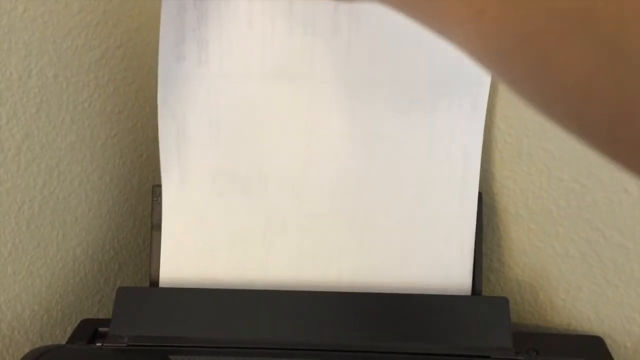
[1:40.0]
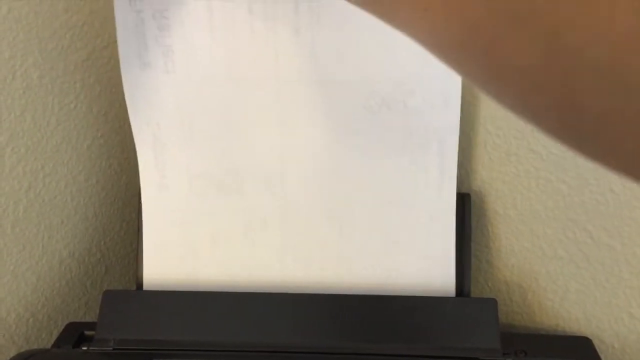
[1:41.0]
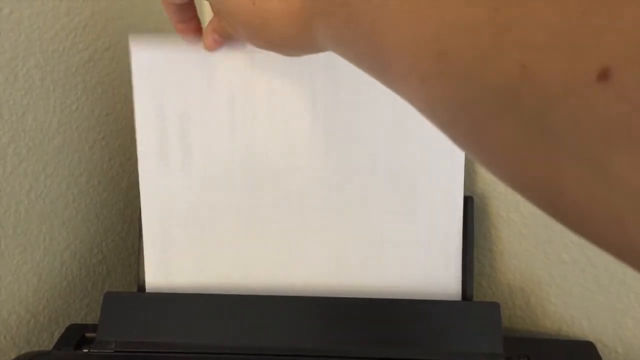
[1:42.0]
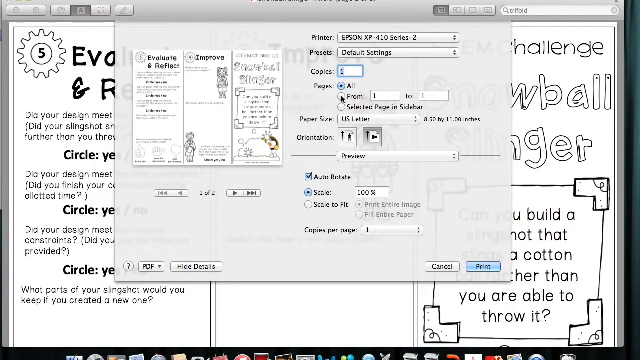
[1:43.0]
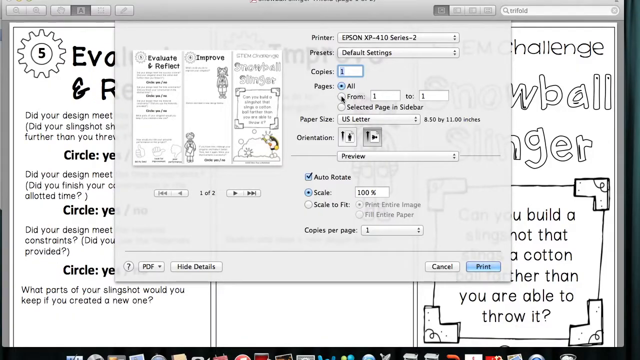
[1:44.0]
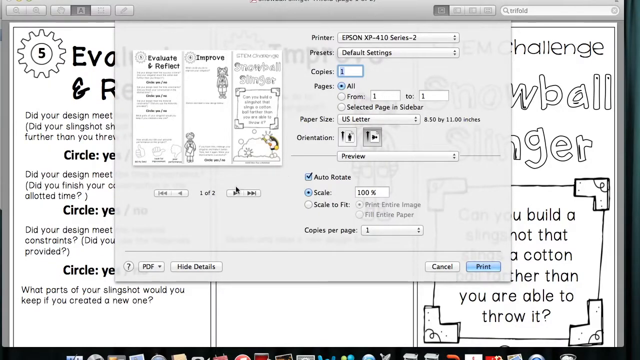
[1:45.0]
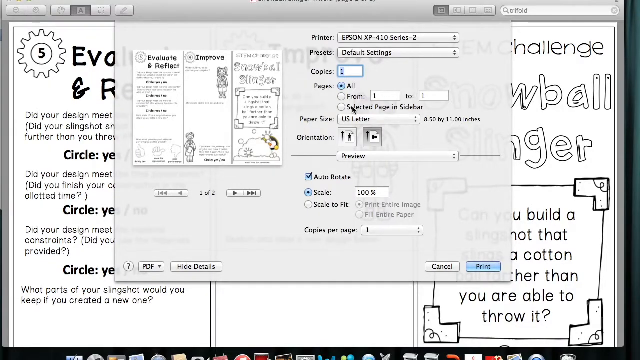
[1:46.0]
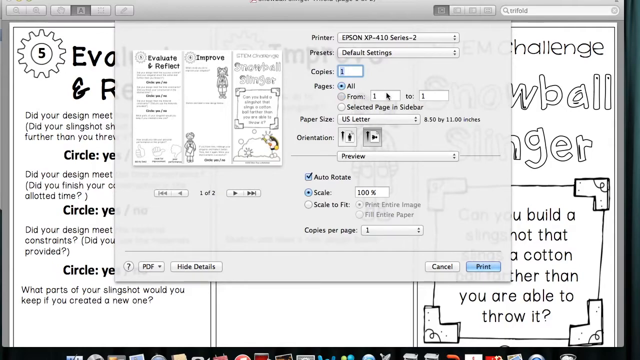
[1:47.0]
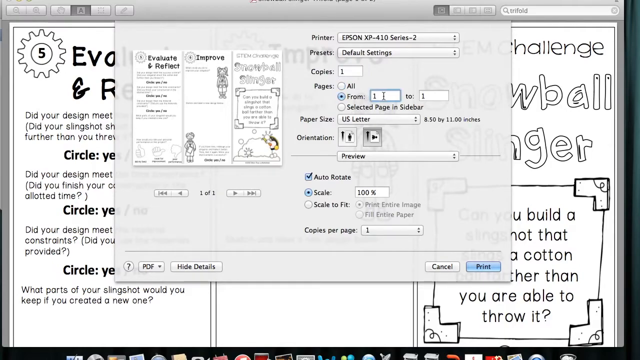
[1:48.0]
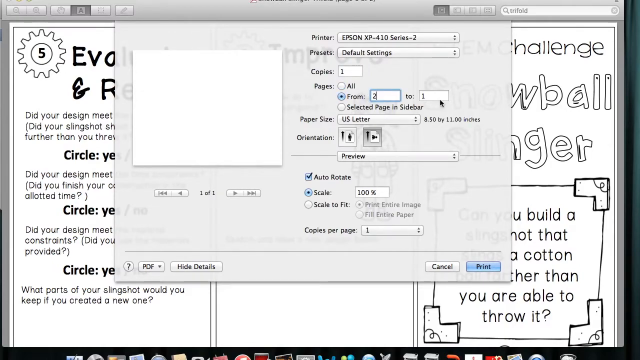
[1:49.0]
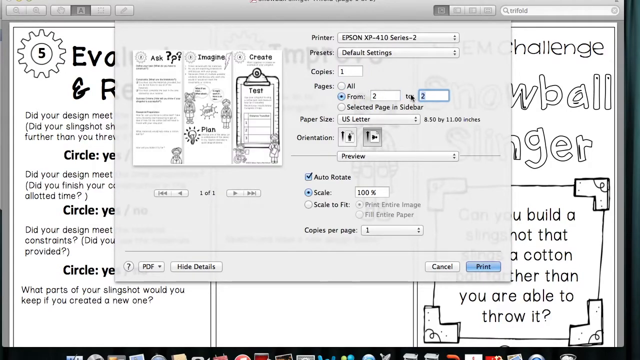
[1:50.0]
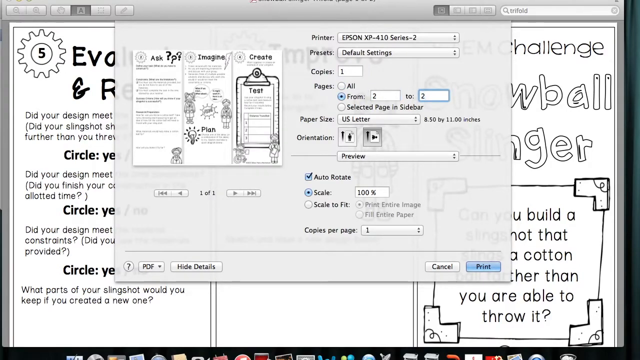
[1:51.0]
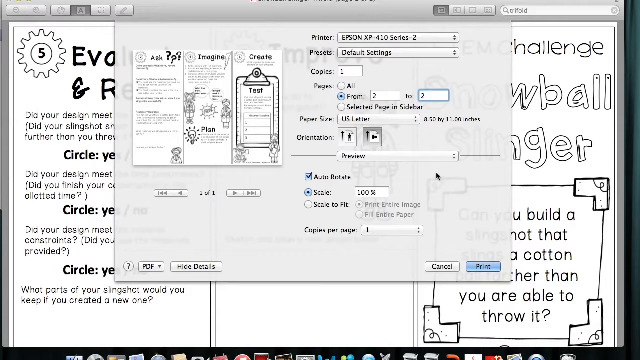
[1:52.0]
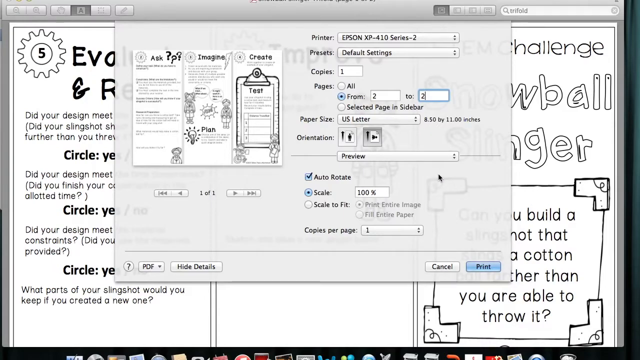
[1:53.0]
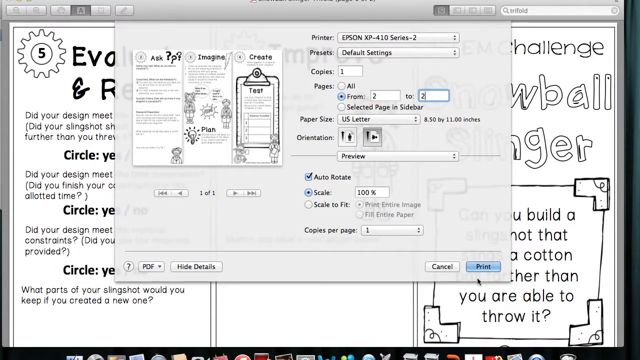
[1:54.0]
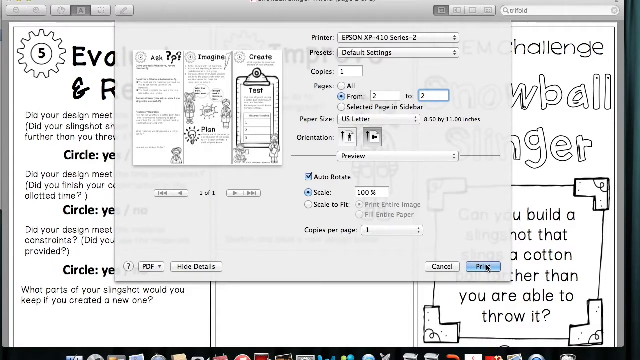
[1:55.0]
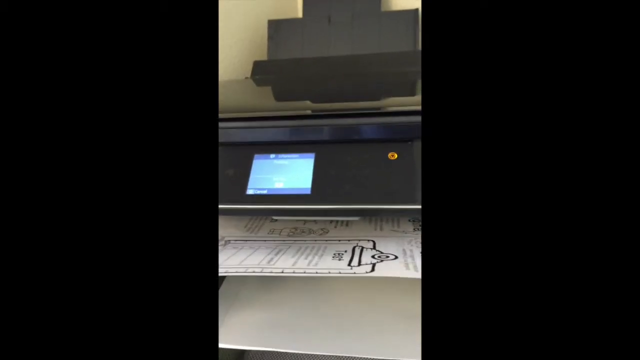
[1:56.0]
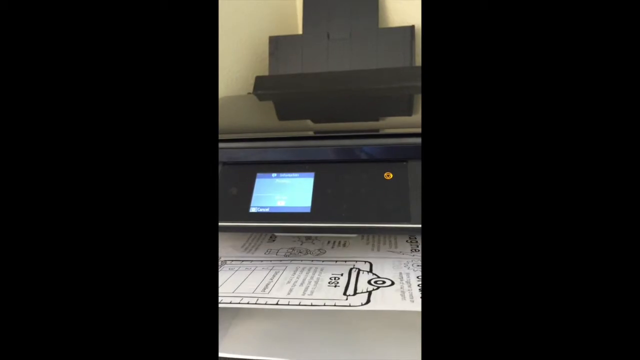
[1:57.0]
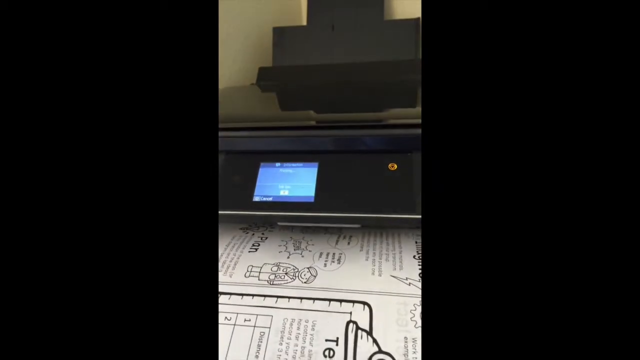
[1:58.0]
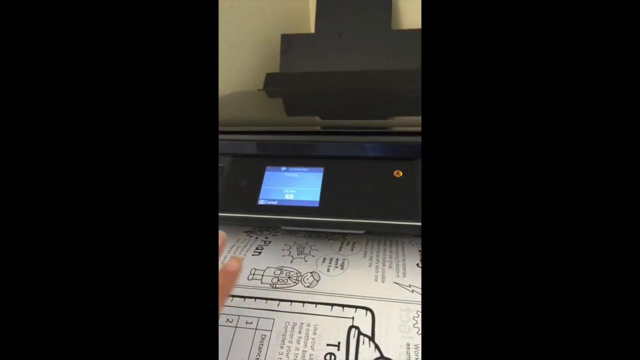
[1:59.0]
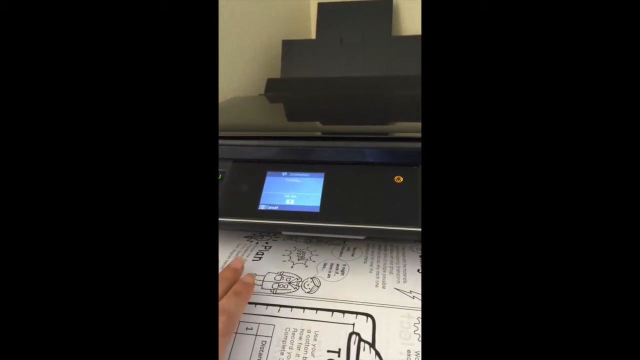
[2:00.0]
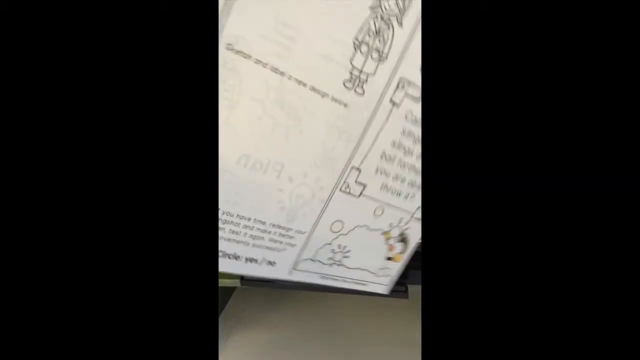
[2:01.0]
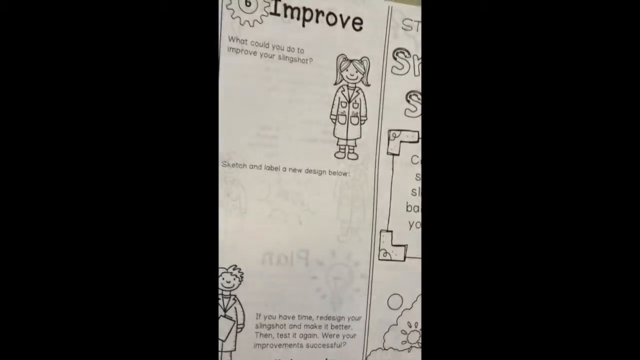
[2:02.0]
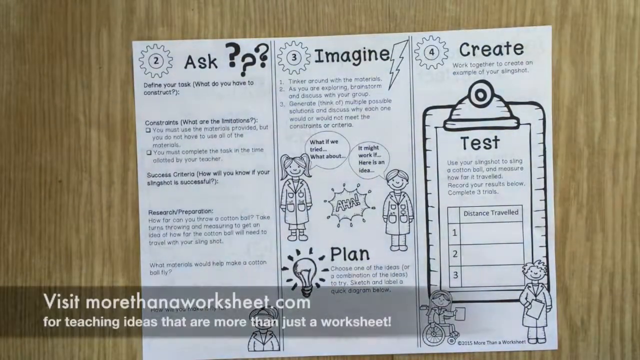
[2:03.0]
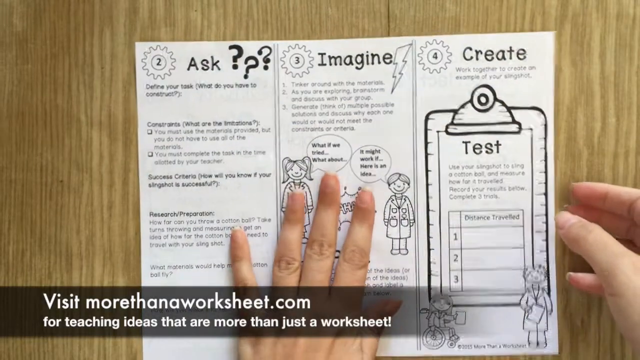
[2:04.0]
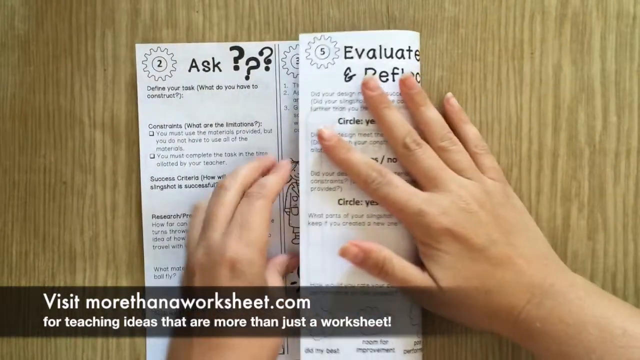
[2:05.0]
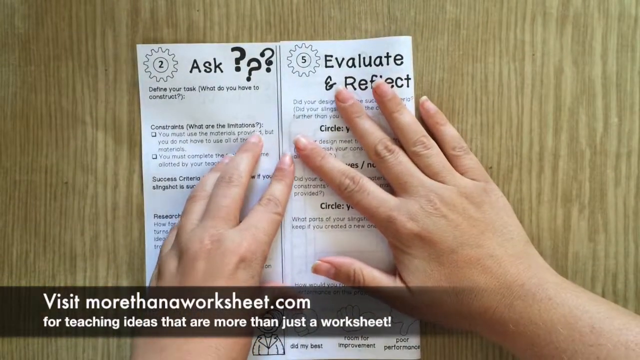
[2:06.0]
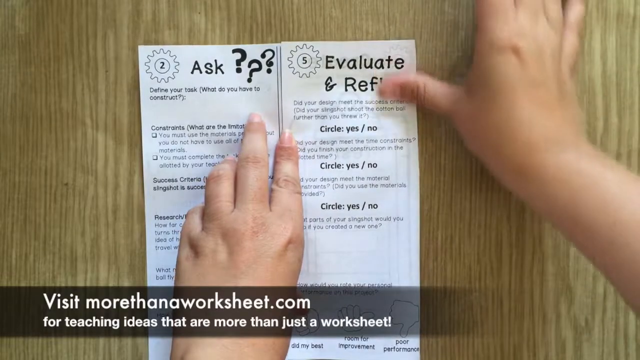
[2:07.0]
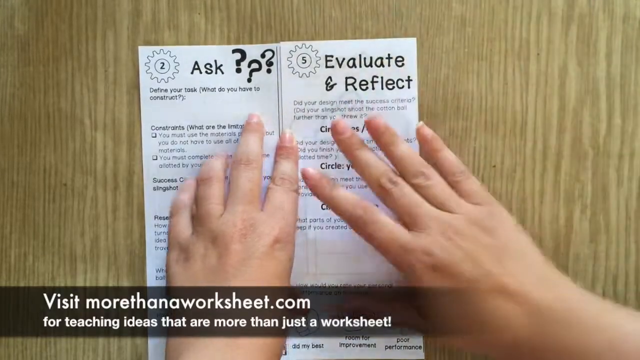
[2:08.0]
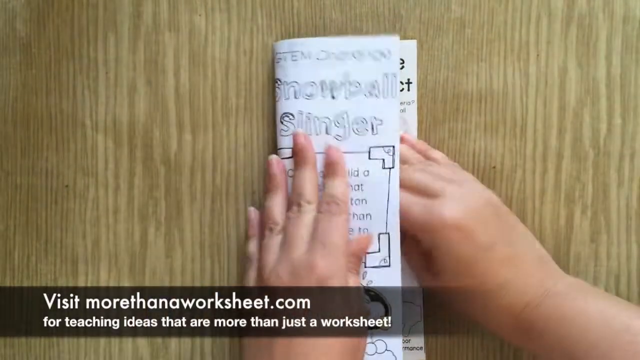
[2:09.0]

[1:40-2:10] She puts the printed paper back into the printer. The walls of the room are white. Back on the computer, she is on the second page of the comic, with pages 2 to 2 selected, auto-rotate, scale at 100, and presets on default settings. The printer selected is Epson X3410 series 2, and copies per page are set to 1. She clicks print, and the printed page comes out of the printer. A link then appears: "Visit more-than-a-worksheet.com for teaching ideas". She puts the STEM challenge together, and the three printed snowball slinger pages are visible behind her.